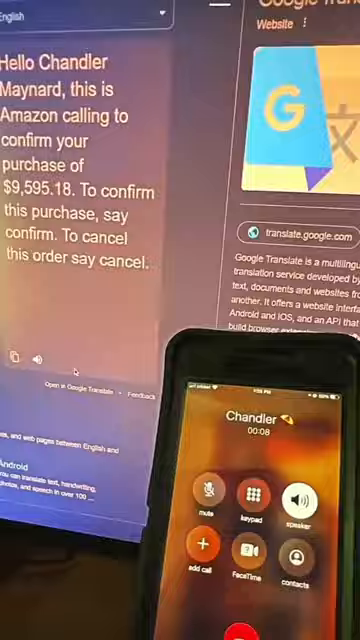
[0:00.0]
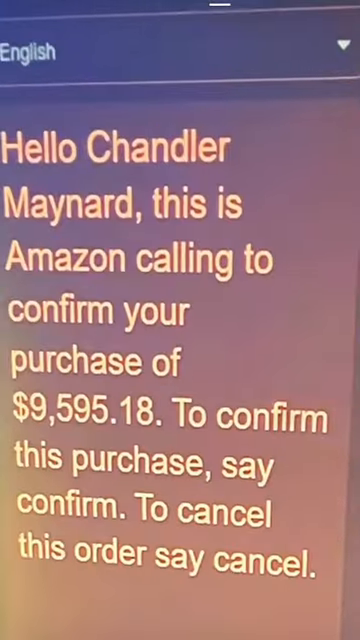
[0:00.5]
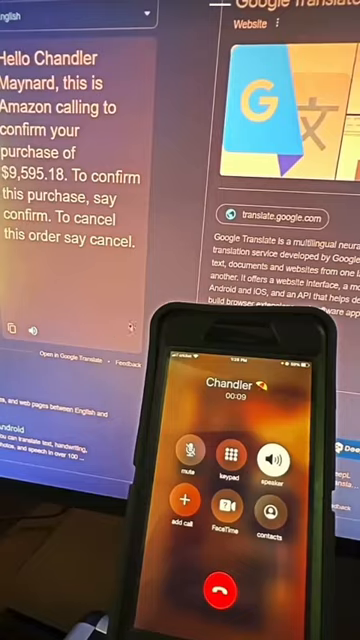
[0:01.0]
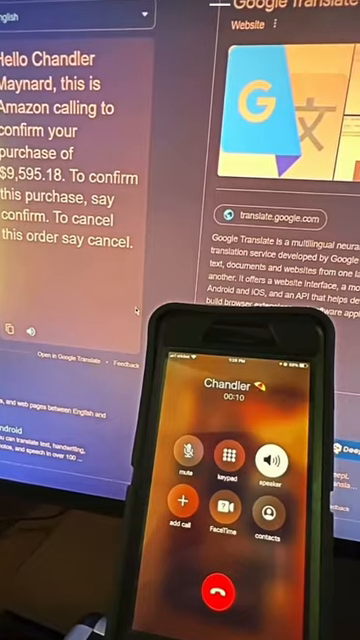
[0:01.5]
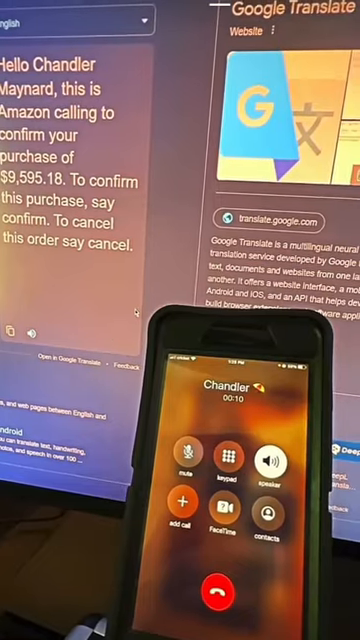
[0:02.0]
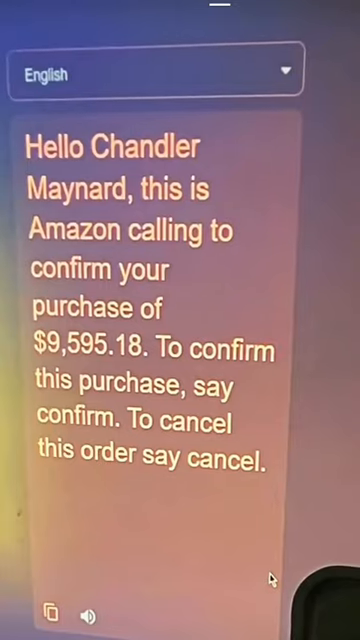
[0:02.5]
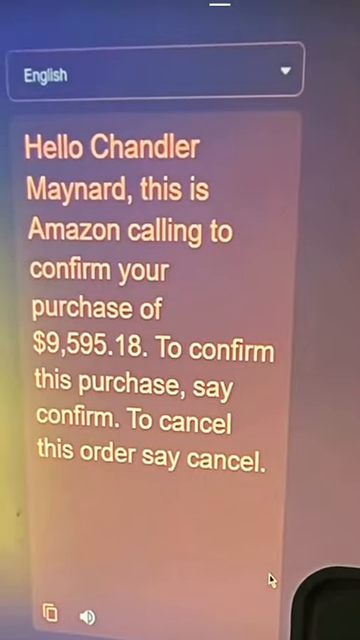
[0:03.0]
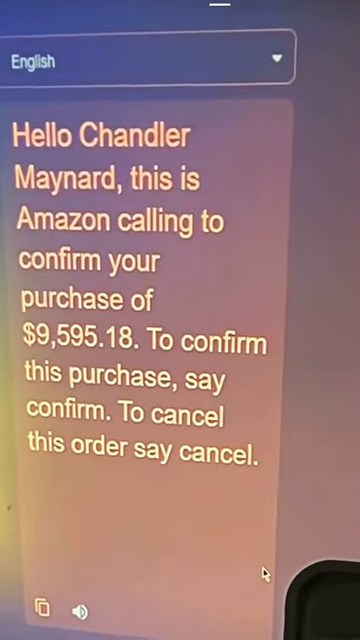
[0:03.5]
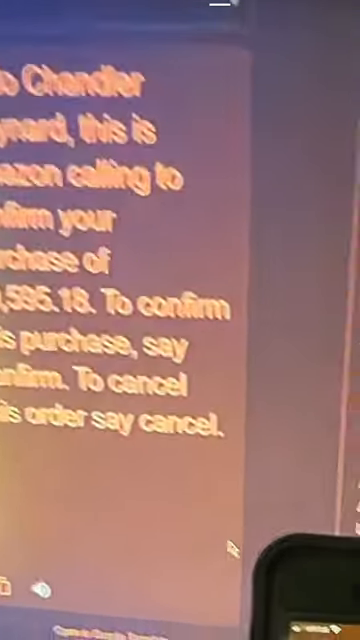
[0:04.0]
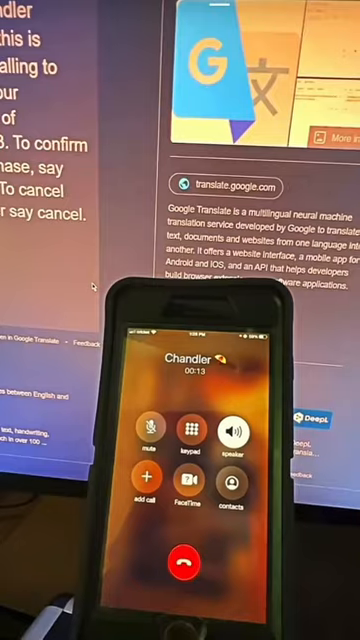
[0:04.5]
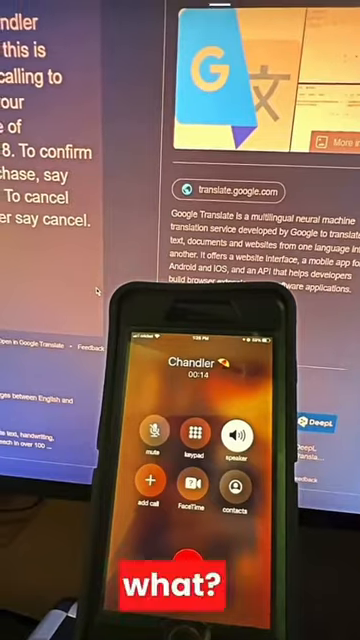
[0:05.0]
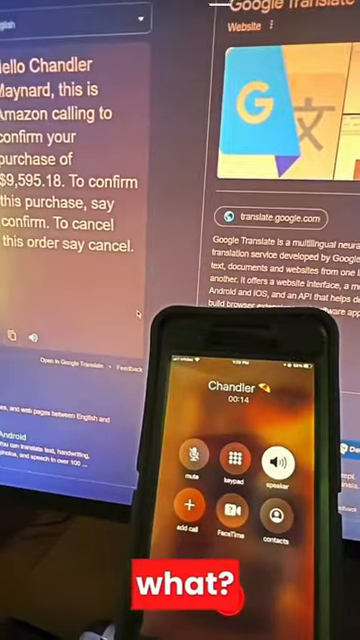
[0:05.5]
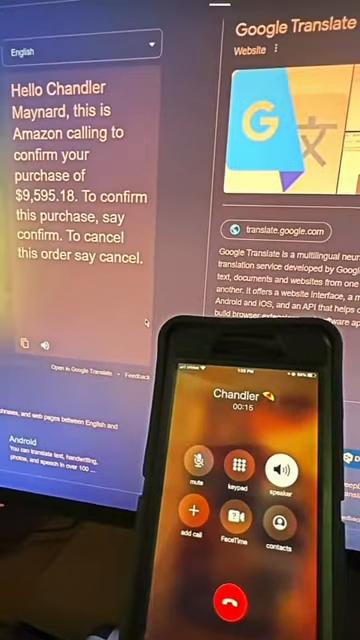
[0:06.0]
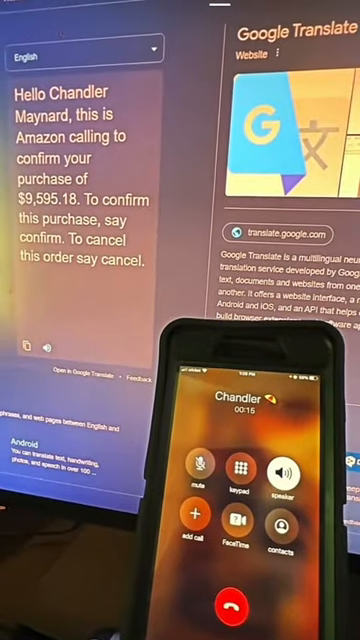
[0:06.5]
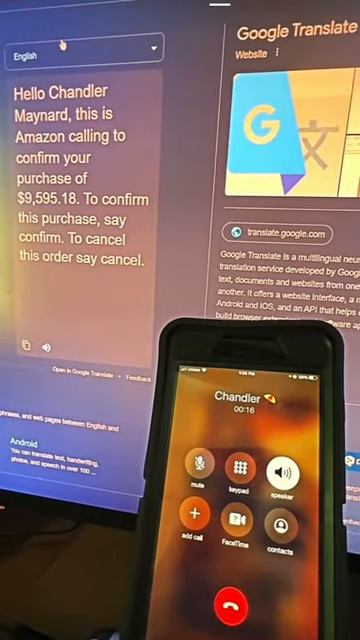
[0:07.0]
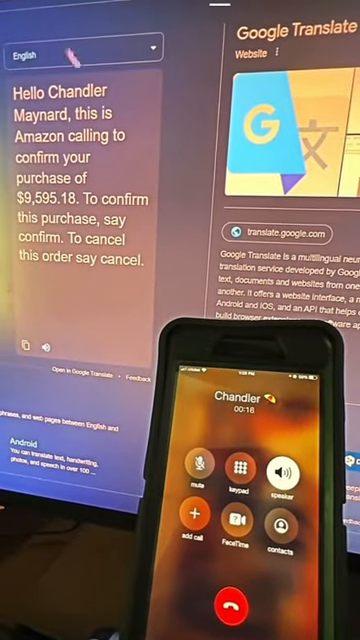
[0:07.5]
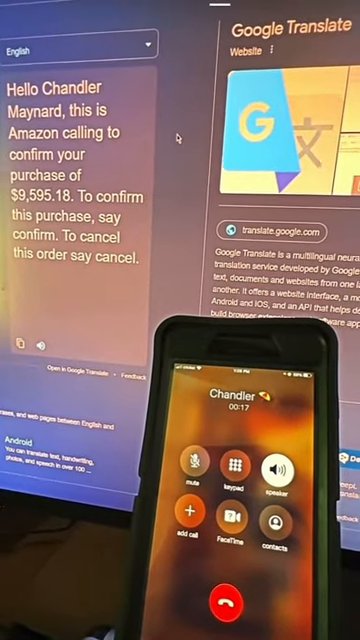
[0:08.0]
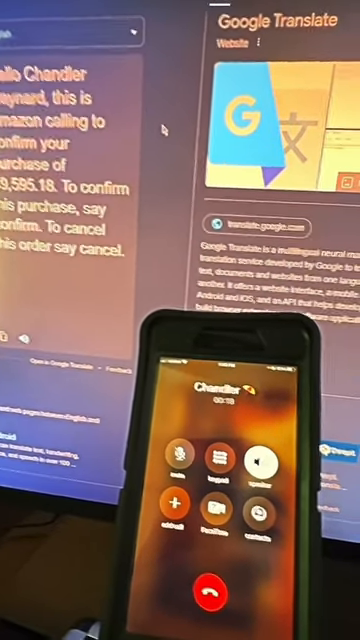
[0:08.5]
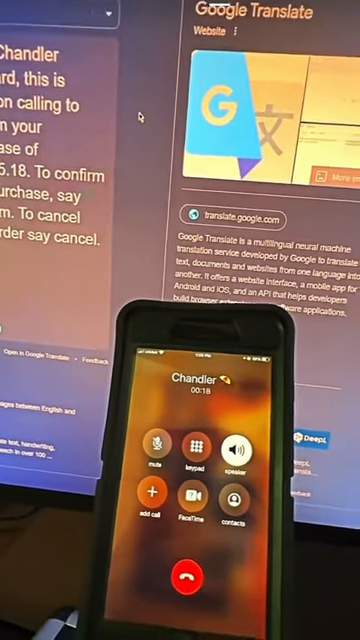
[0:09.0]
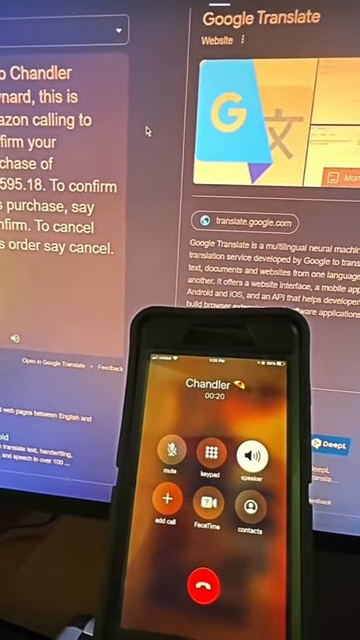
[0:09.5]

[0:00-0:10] A cell phone is on screen, showing a call with someone named Chandler; the call timer reads "00.08". Behind the phone an internet browser is open, and the screen reads "hello Chandler Maynard. This is Amazon calling to confirm your purchase of $9,595.81. To confirm this purchase say confirm. To cancel this order say cancel." The browser seems to be Google's, with "google.com" shown on the right. The word "what" then pops up in white on red at the bottom of the screen, and the call keeps going, eventually reaching 21 seconds.